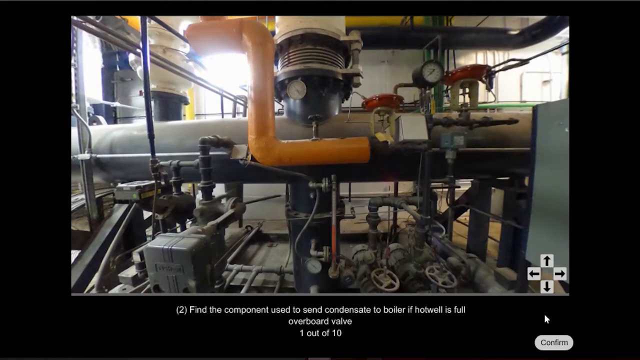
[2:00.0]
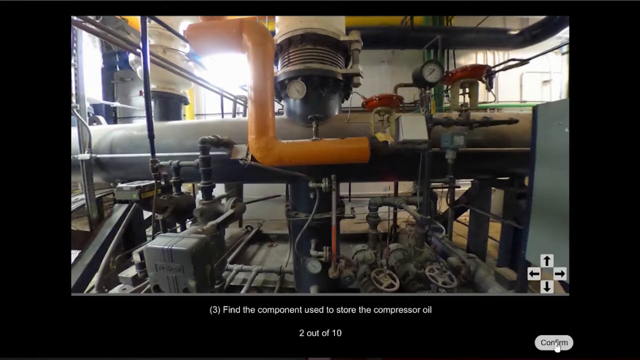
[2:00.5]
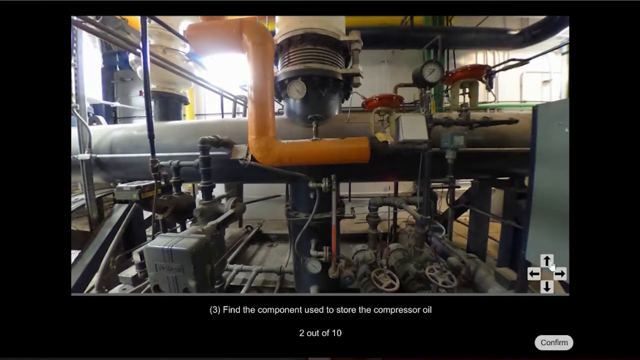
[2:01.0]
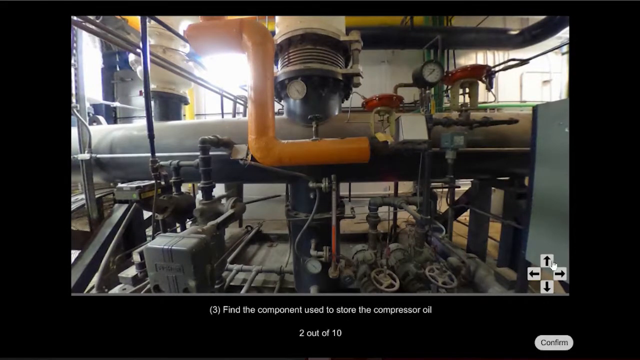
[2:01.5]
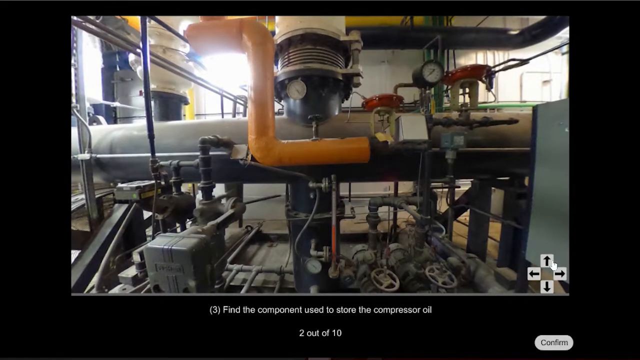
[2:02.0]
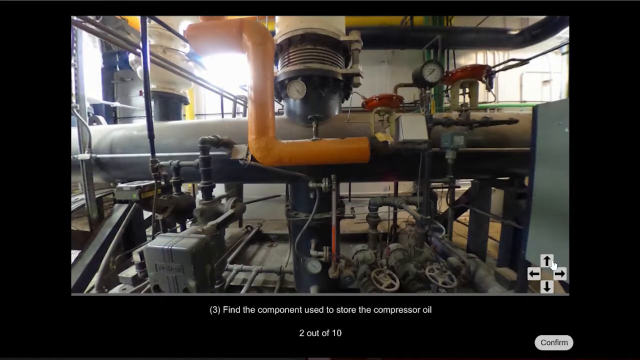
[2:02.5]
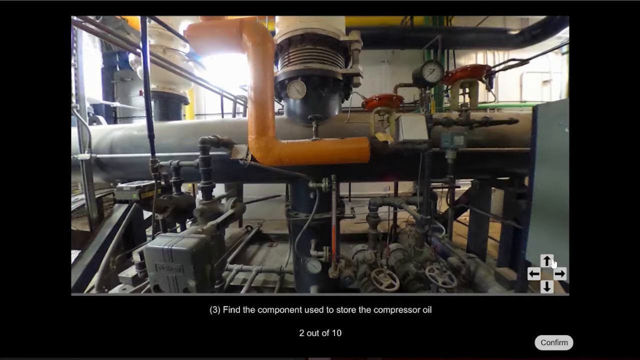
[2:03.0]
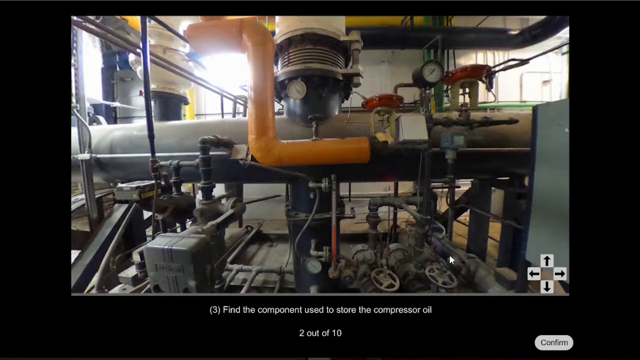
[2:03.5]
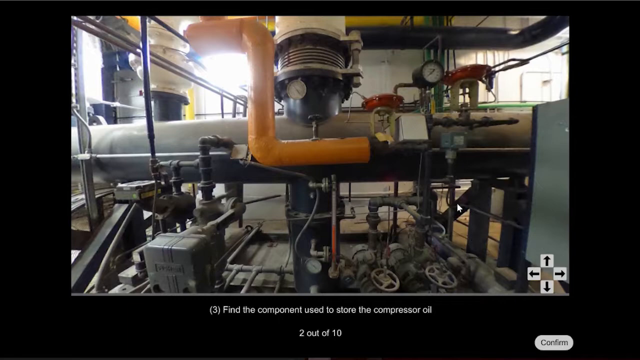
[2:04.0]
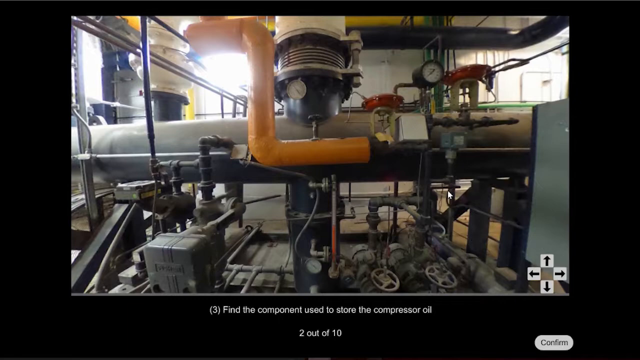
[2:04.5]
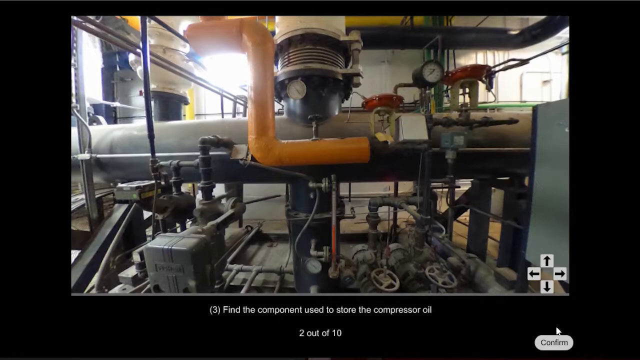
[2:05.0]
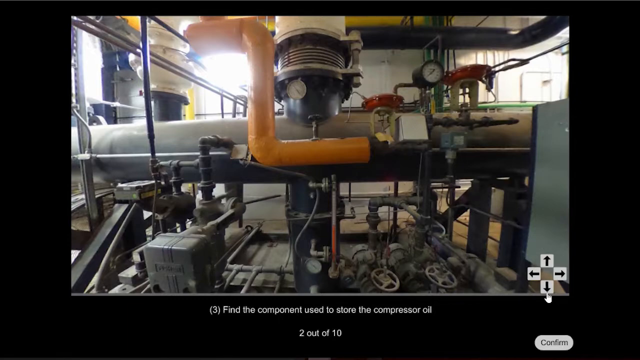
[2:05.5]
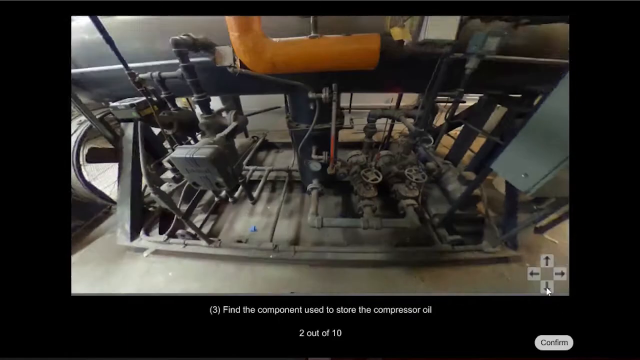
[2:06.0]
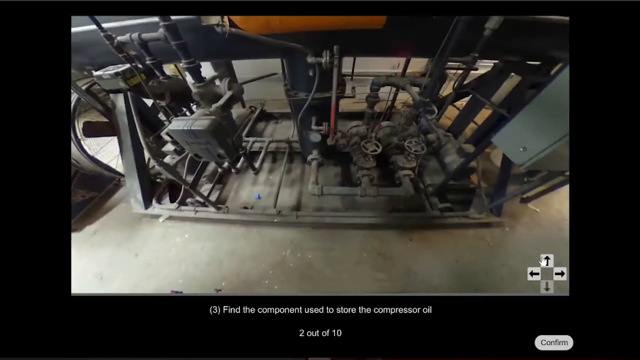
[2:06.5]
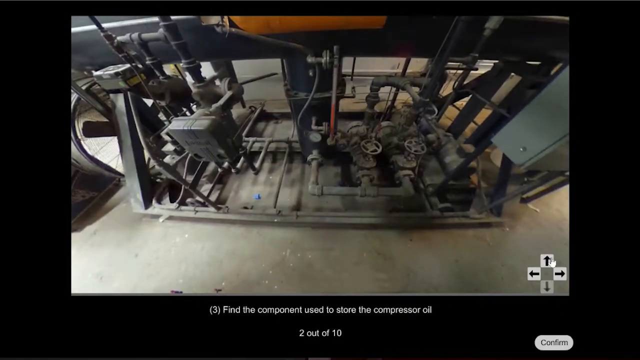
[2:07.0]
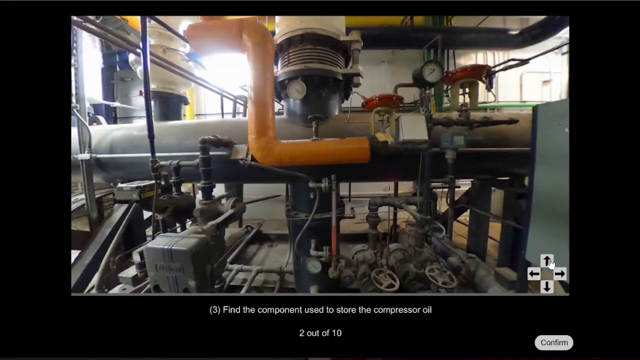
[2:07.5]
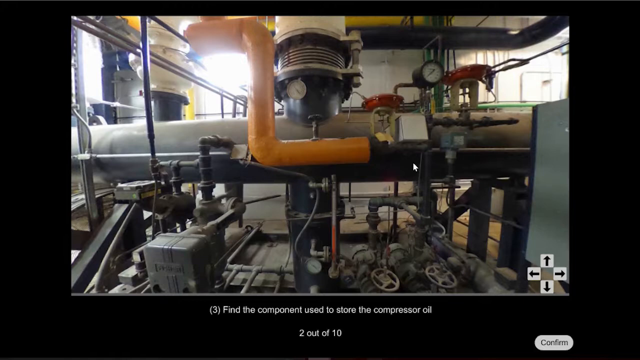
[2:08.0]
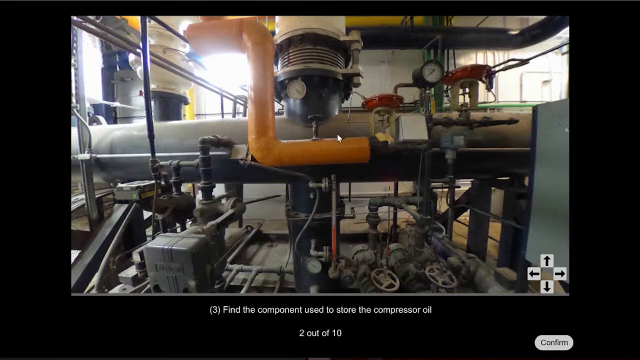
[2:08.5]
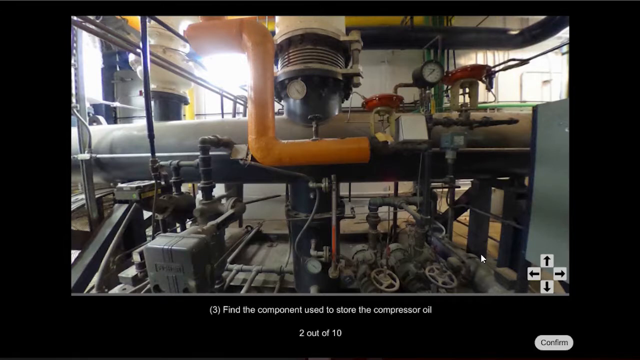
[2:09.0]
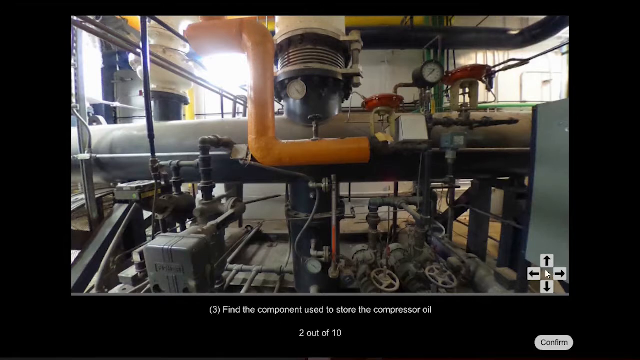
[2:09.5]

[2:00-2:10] The view faces the piece of equipment that was to the right of the original machinery. On screen is question 2, "Find the component used to send condensate to boiler if hotwell is full.", before the user switches to question 3, "find the component used to store the compressor oil." The user scrolls down, then back up to the starting view. Scrolling up shows the gauge, valves, many different pipes, the orange pipe and the white pipe from the ceiling, and scrolling down shows valves.